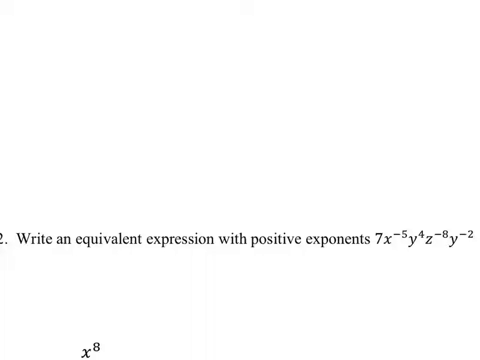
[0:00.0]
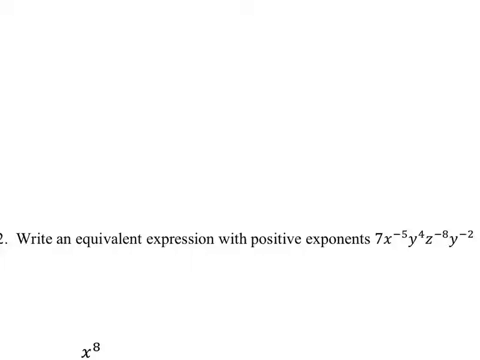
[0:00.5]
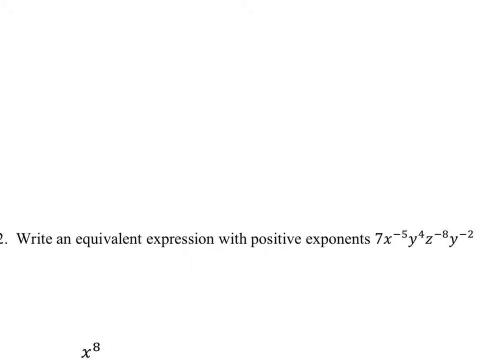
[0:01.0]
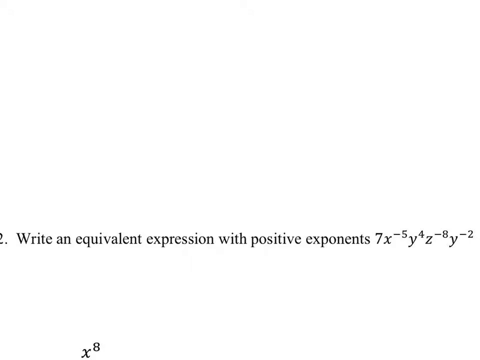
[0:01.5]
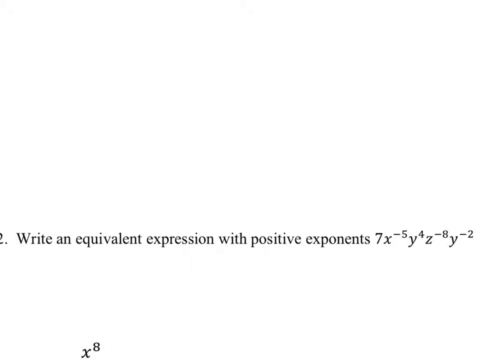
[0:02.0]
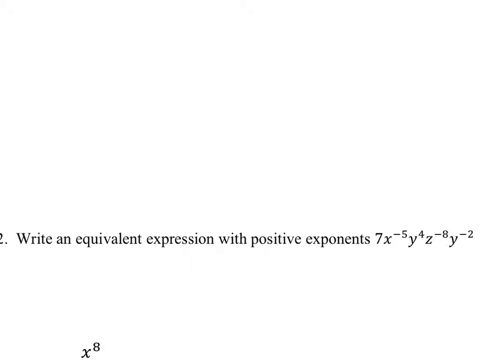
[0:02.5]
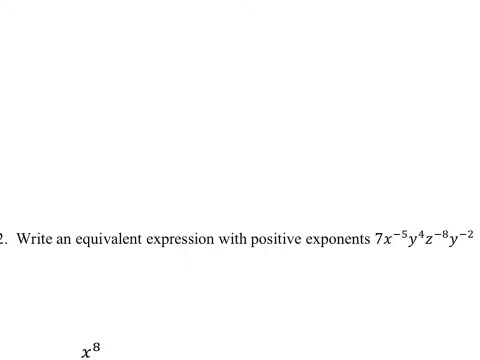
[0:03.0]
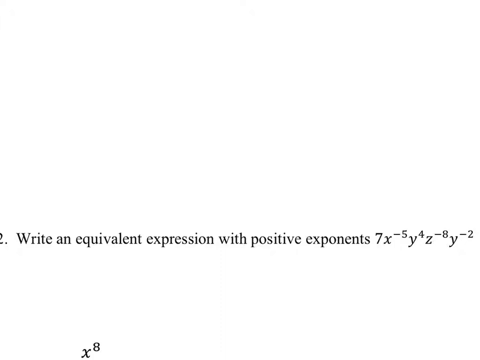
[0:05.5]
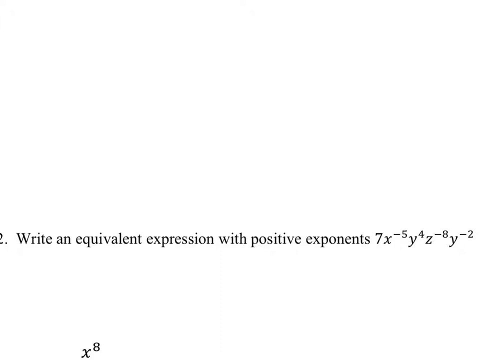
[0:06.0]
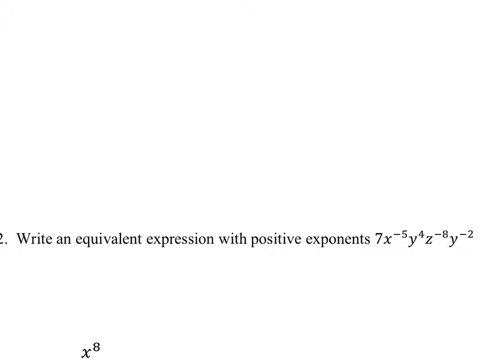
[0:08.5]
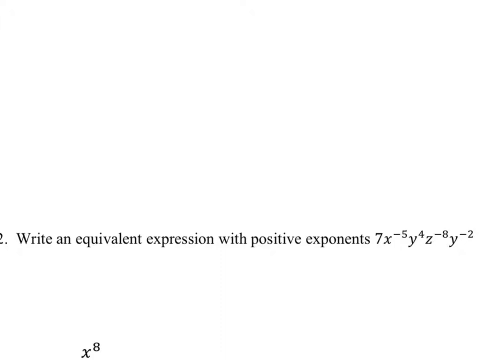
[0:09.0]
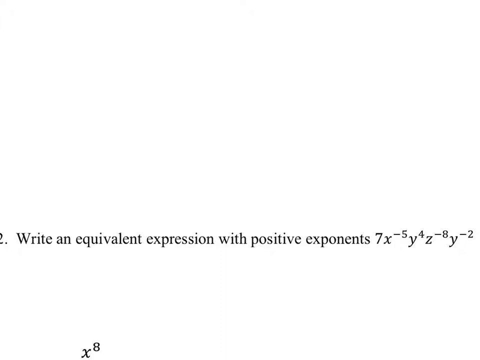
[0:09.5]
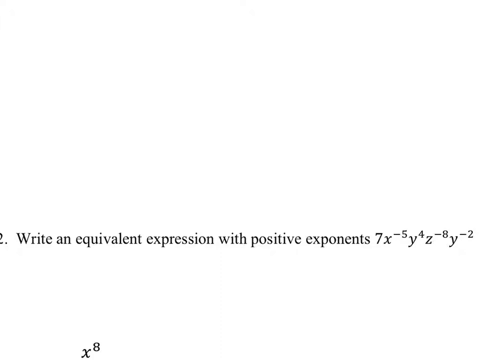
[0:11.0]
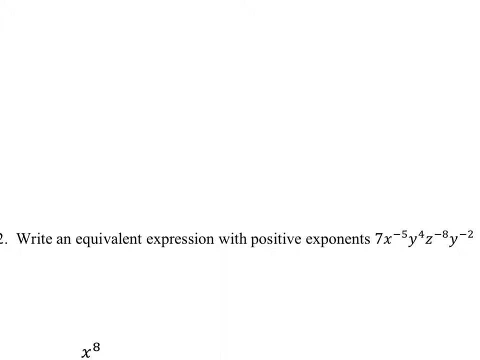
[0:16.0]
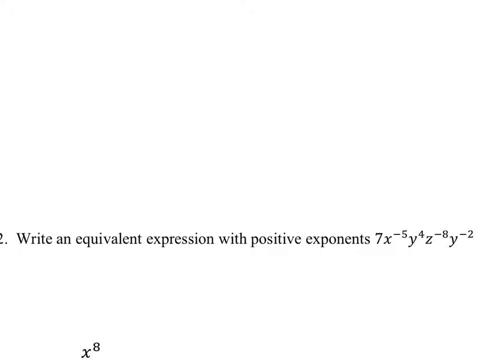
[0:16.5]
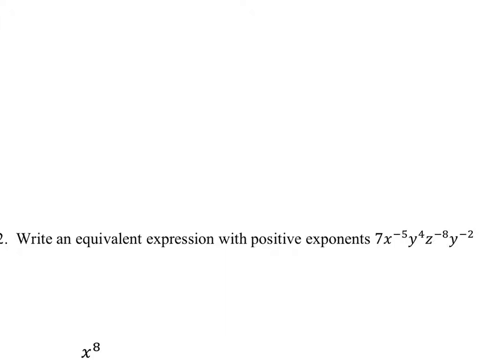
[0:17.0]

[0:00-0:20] The screen is white, with a gradient across roughly the lower 20% that transitions from white to black, giving the surface an illusion of depth. Toward the bottom of the screen is a numbered point, number 2, with a typed line that reads "write an equivalent expression with positive exponents" followed by 7x to the negative fifth, y to the fourth, z to the negative eighth, and y to the negative two. The exponents are in superscript. The text is black and the sentence is in a regular font. The variables are italicized, while the exponents appear not to be. This single frame stays on the screen.